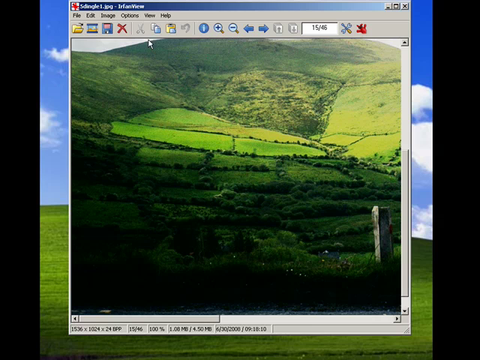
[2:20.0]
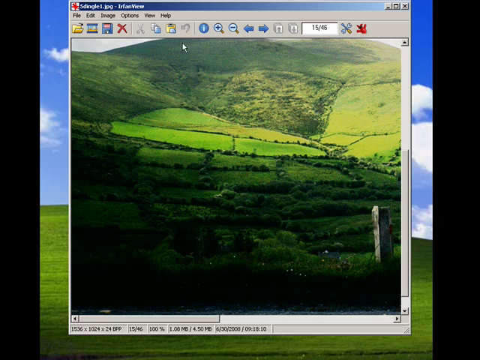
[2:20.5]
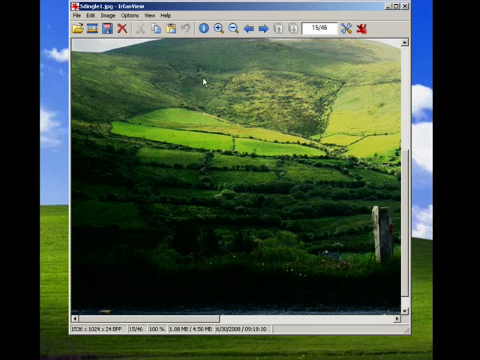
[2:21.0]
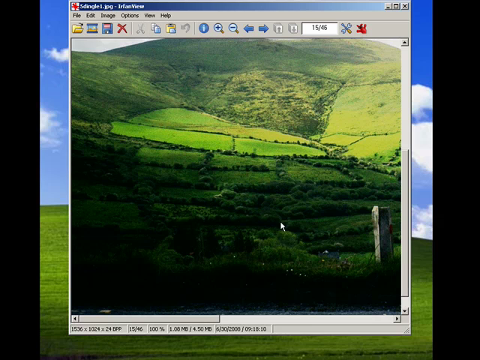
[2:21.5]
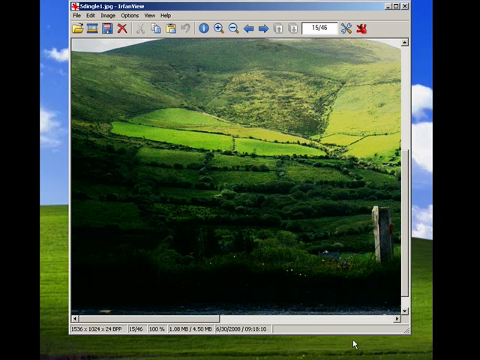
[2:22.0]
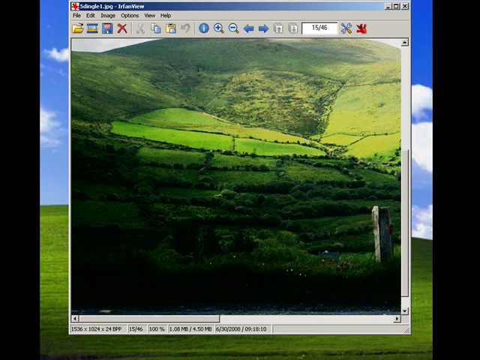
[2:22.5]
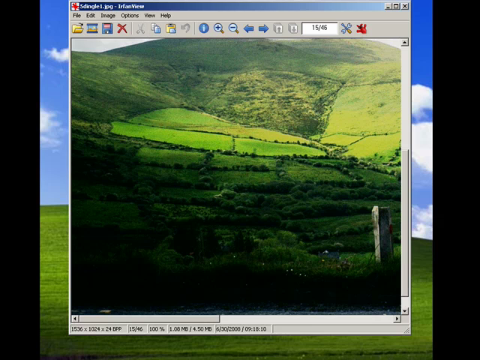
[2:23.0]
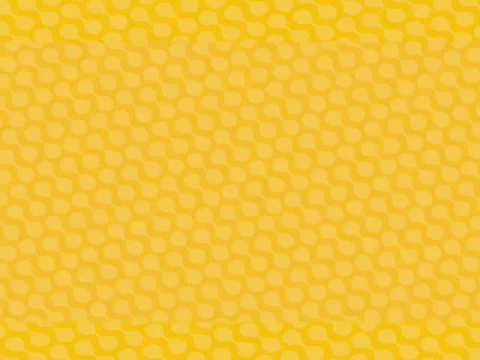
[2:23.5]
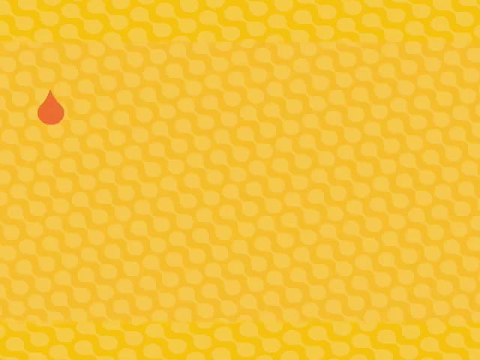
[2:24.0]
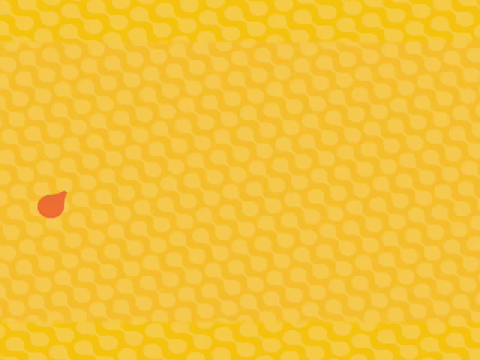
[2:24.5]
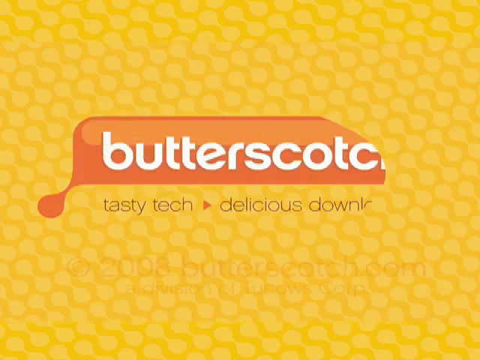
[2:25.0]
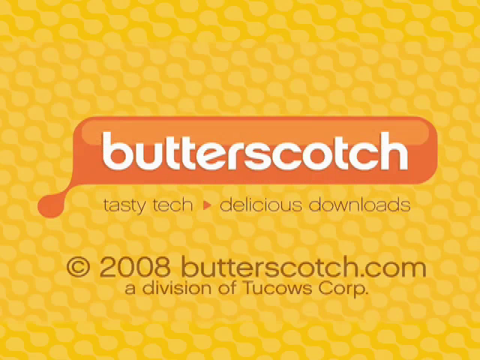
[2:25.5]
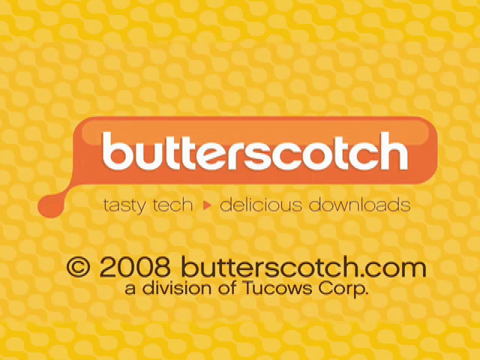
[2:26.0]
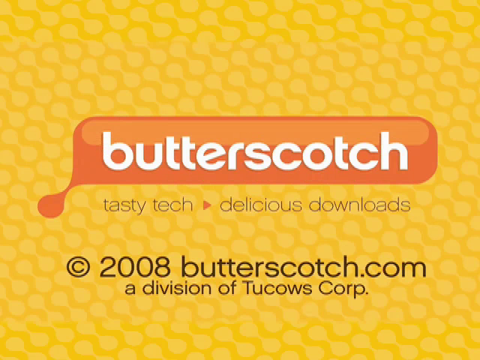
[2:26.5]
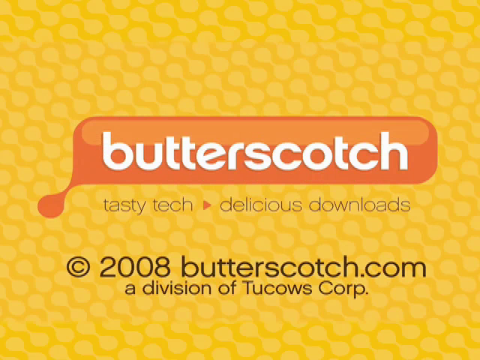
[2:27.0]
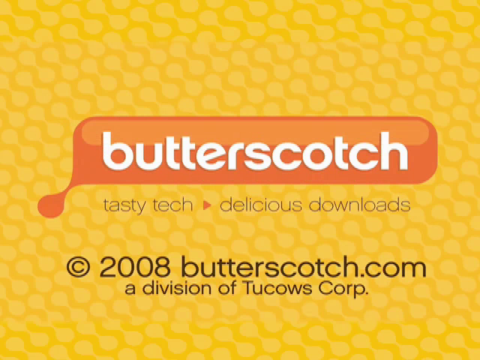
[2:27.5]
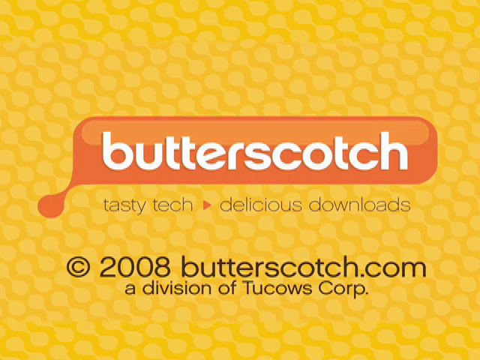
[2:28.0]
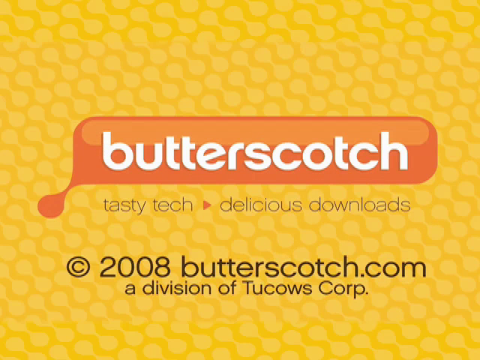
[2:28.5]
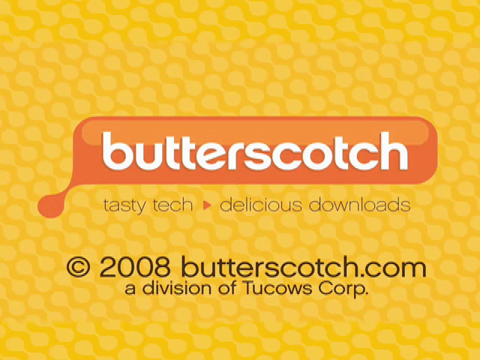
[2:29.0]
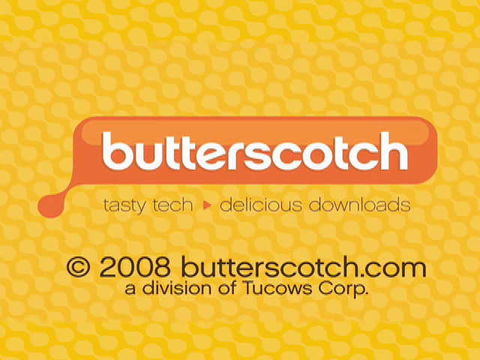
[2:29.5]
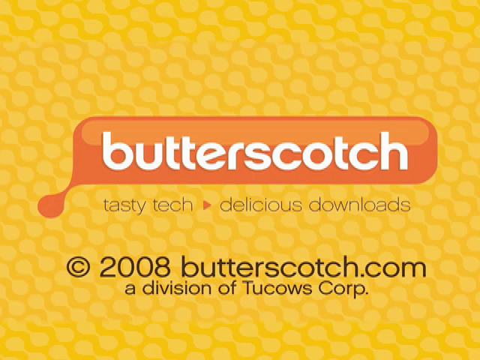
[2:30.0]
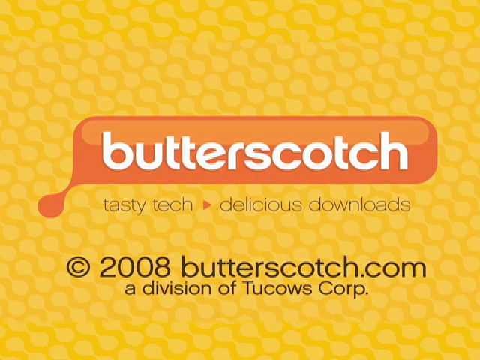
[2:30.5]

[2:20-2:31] An open computer screen shows an open page with a photograph of rolling green hills. The land looks like it is divided into rectangles by trees and bushes, and in the lower right corner of the photograph there is what looks like a tall stone monolith. The computer's arrow cursor moves about the screen. As the video ends, an end card appears with a bright yellow background showing the word "Butterscotch" in a brown text bar, one corner of which looks as though it is dripping to the side. Under this it says "tasty tech delicious downloads," and below that "Copyright 2008 butterscotch.com, a division of Tucows Corp."